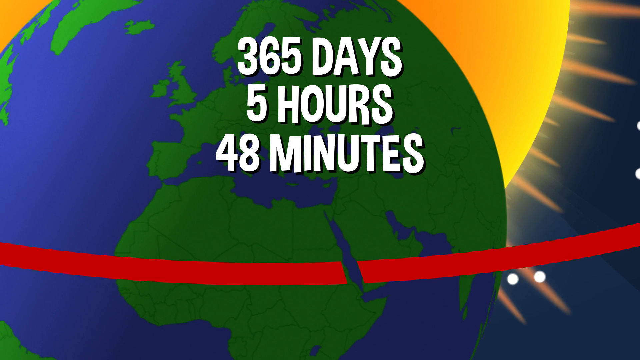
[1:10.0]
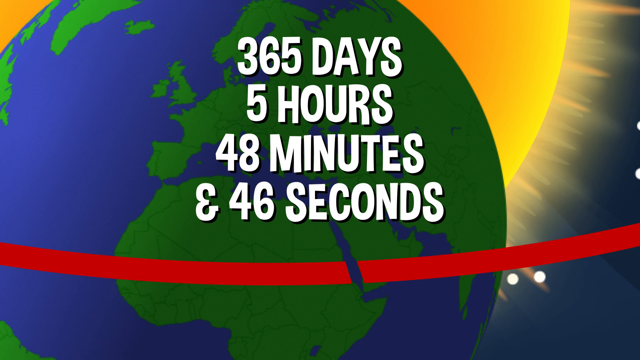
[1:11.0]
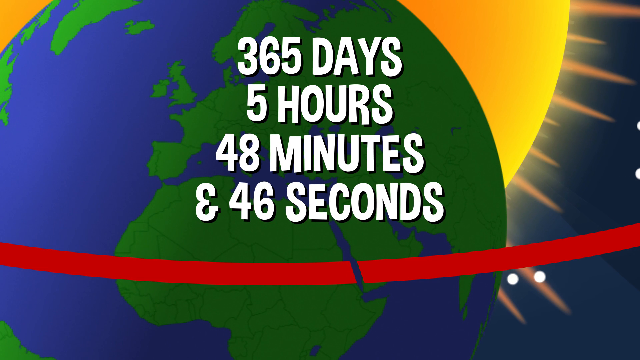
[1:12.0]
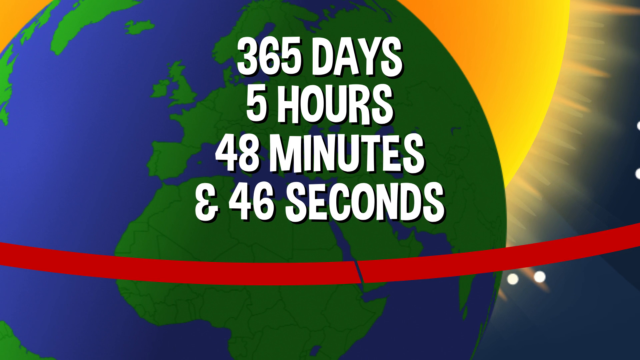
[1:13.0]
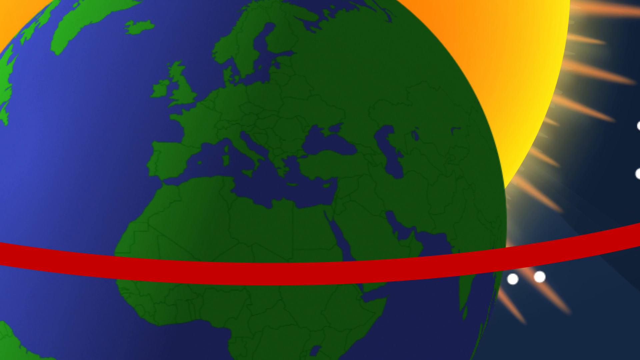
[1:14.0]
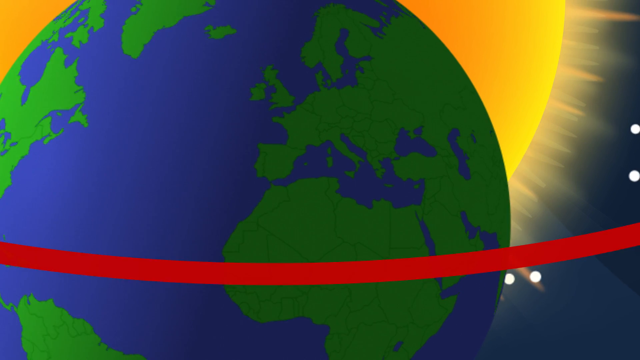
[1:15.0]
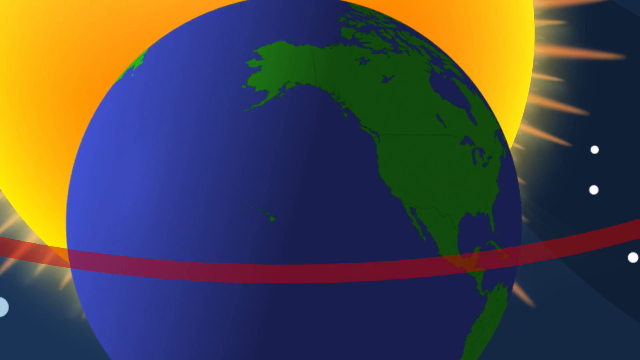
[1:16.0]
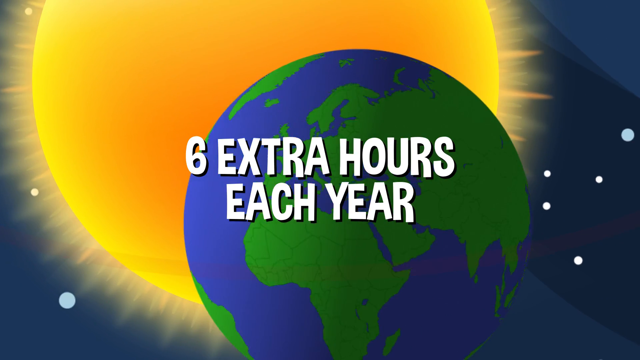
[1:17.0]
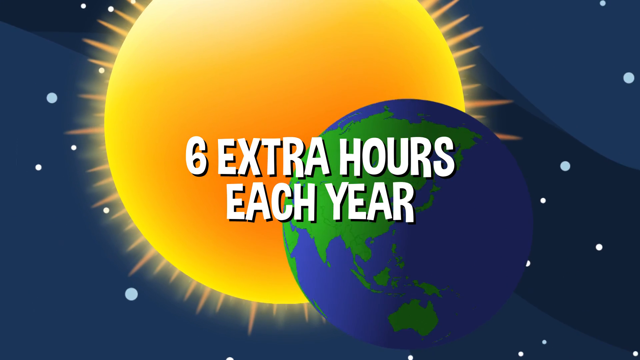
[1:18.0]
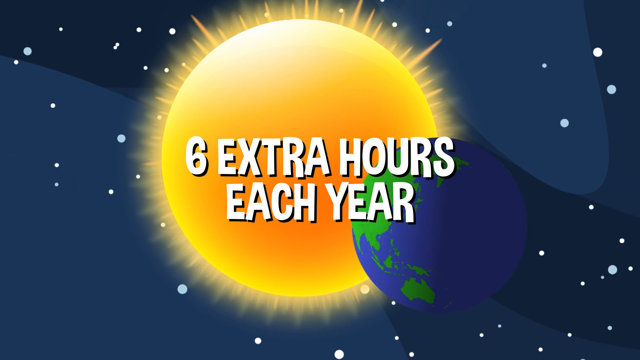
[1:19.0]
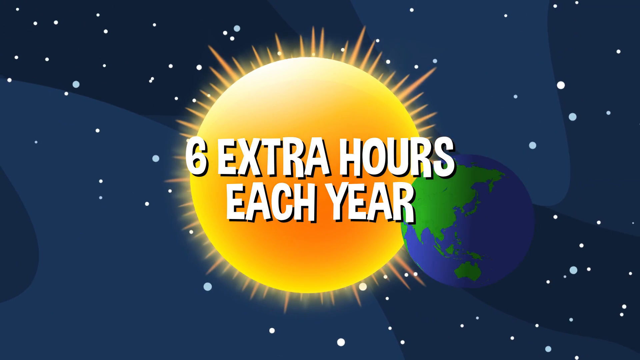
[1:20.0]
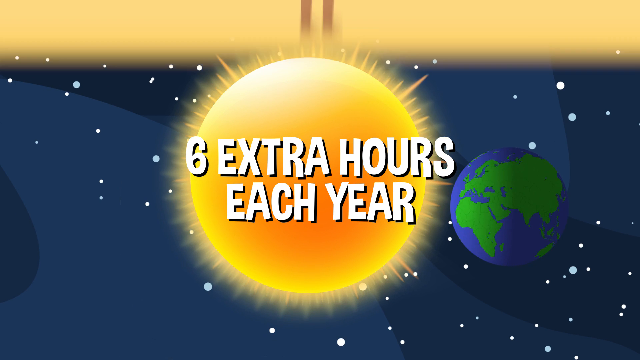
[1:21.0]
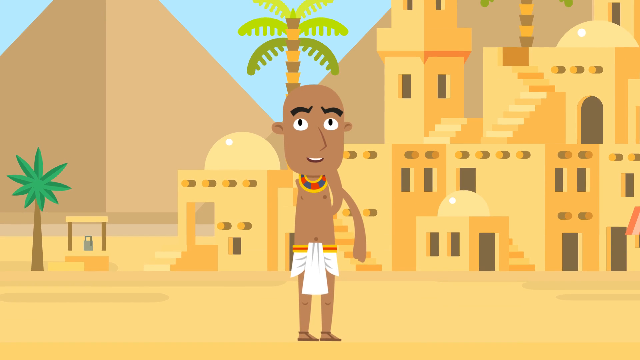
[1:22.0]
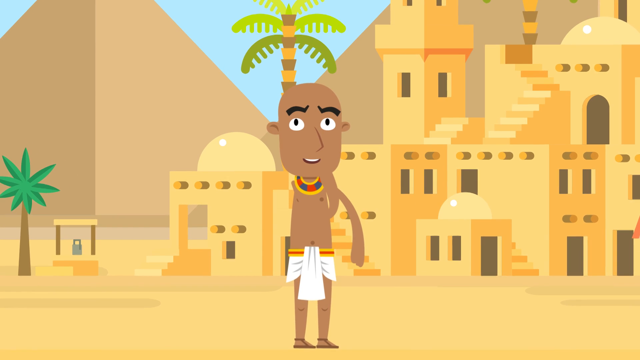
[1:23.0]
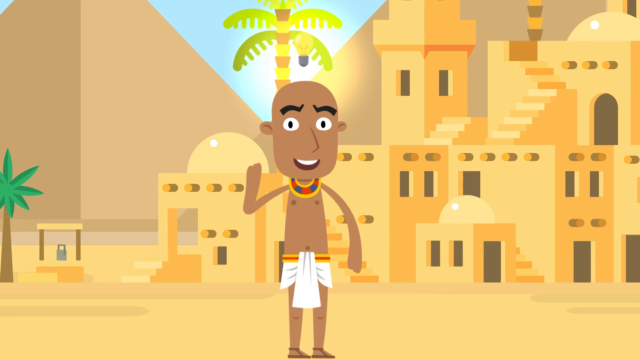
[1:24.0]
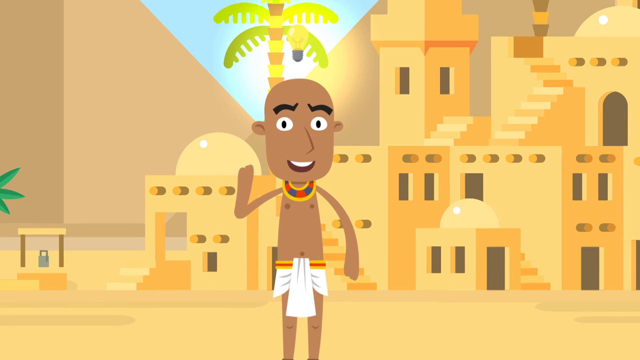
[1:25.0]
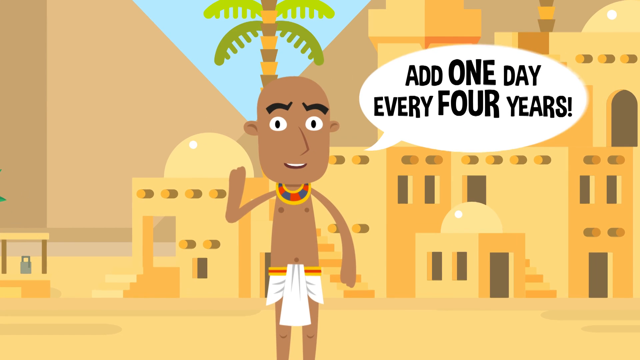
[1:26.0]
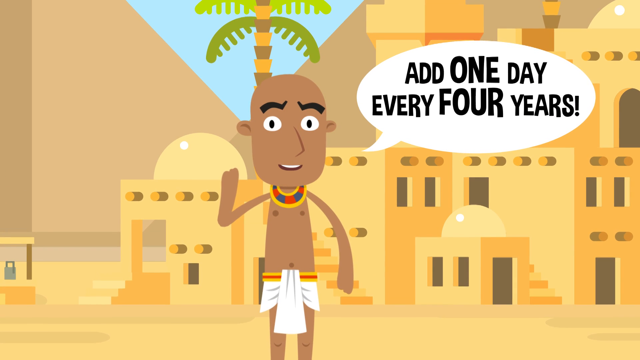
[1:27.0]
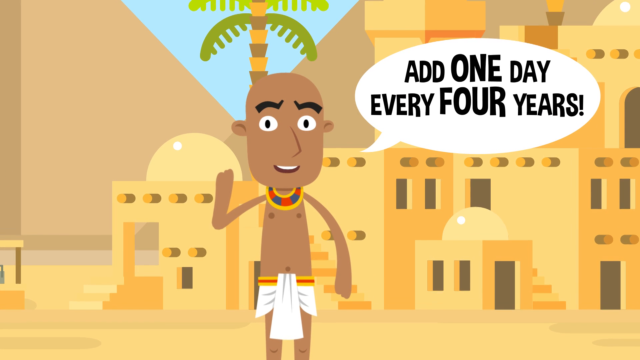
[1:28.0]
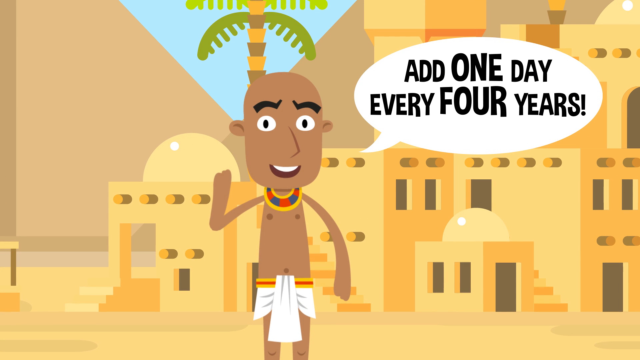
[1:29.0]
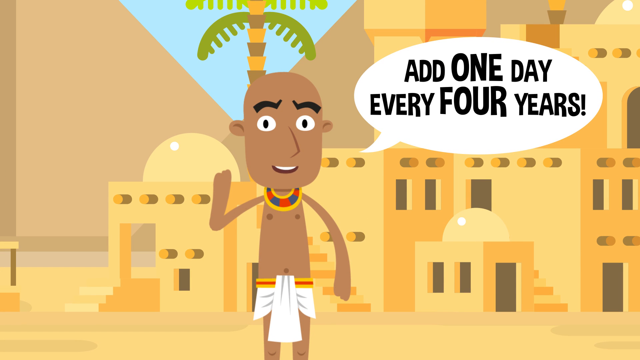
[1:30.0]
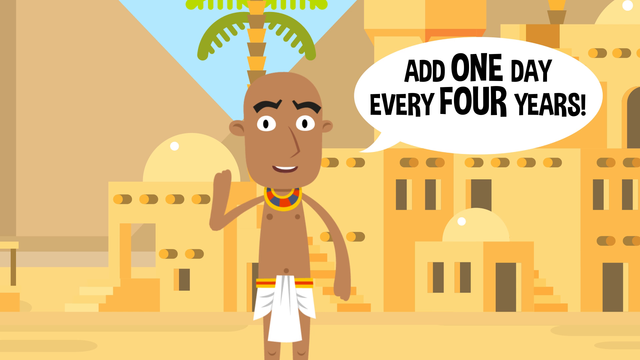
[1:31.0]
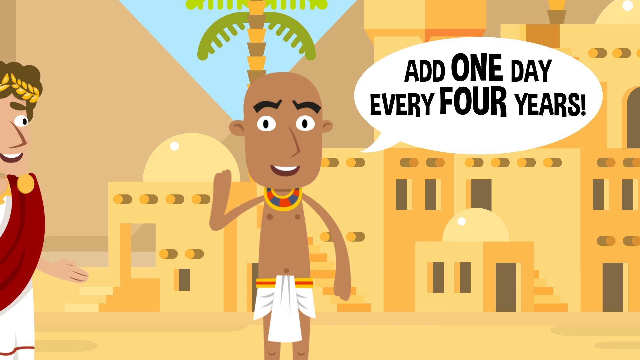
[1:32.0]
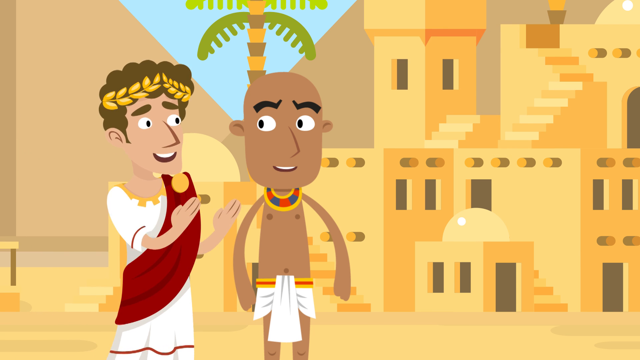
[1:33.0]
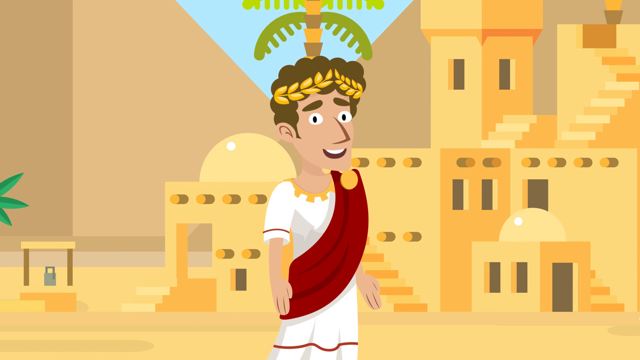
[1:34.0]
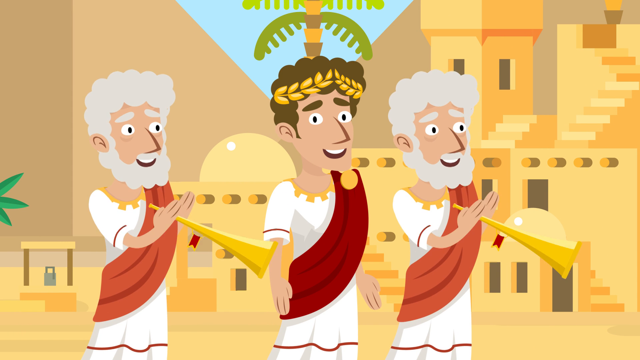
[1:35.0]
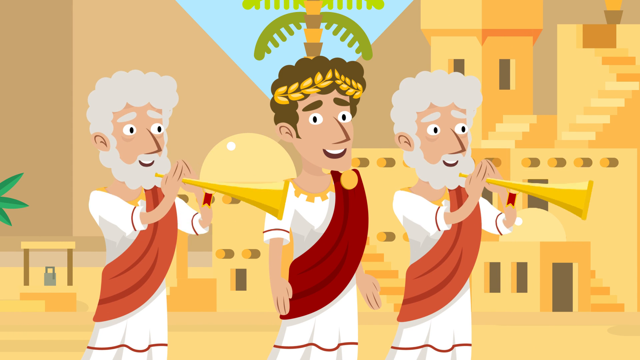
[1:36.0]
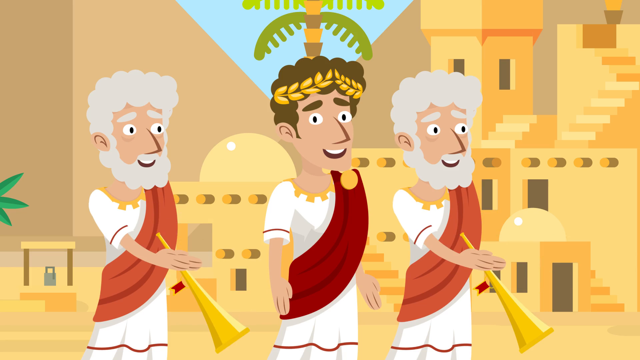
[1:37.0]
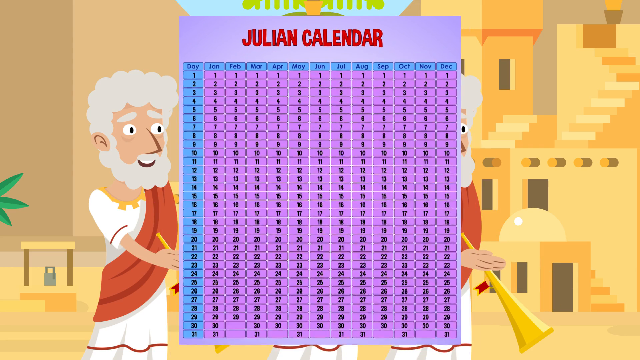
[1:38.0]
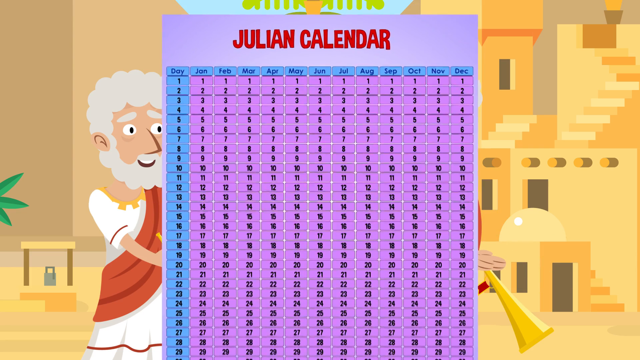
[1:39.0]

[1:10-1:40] The text about 365 days, 5 hours, 48 minutes and 46 seconds is shown, then removed, and another text appears reading "6 extra hours for each year". The scene shifts to Egypt, possibly ancient judging by the clothing of a character standing in front of some buildings; he wears no shirt, only a white turban and an Egyptian collar. A text bubble appears next to him reading "add a day for every 4 years", and he appears to be talking. A Roman then arrives and pushes him to one side; the Roman seems to be Caesar, and two old men beside him play trumpets. The Julian calendar then appears on screen, showing several months with different numbers of days.